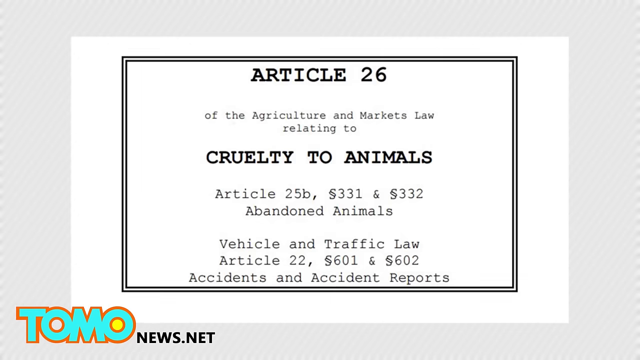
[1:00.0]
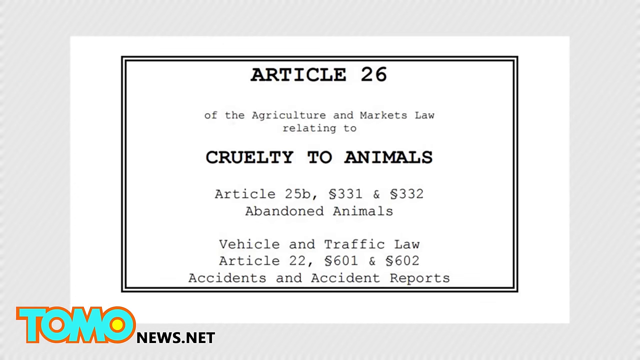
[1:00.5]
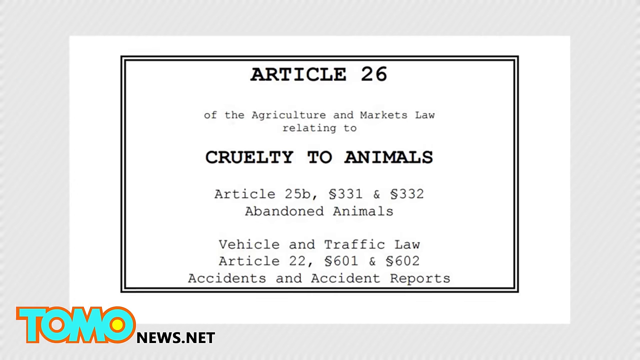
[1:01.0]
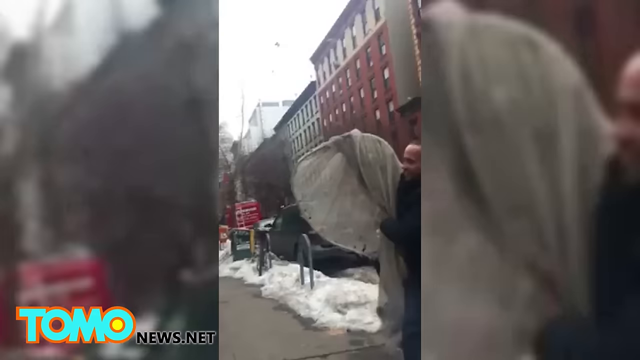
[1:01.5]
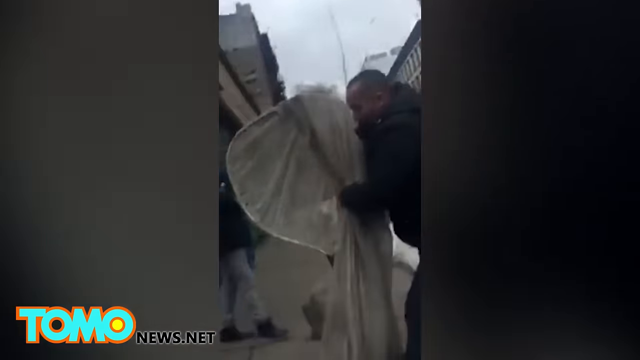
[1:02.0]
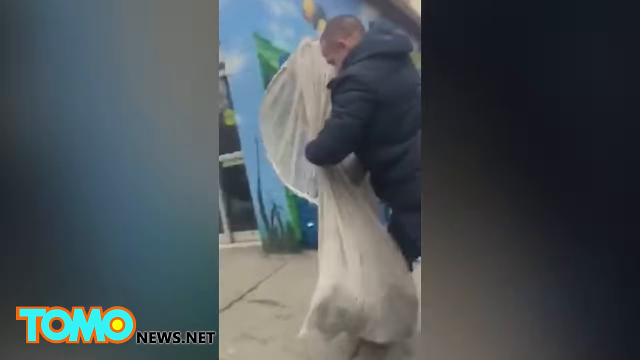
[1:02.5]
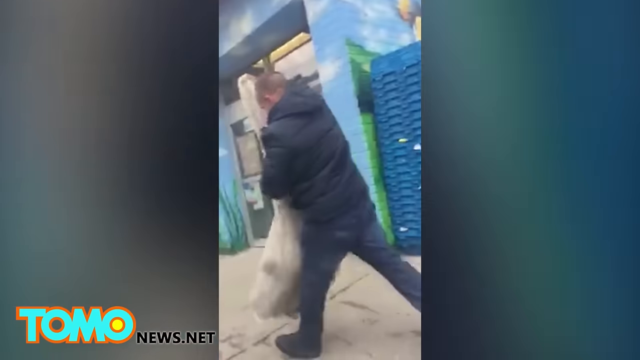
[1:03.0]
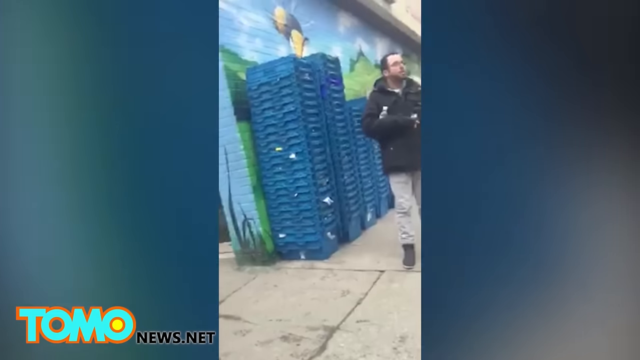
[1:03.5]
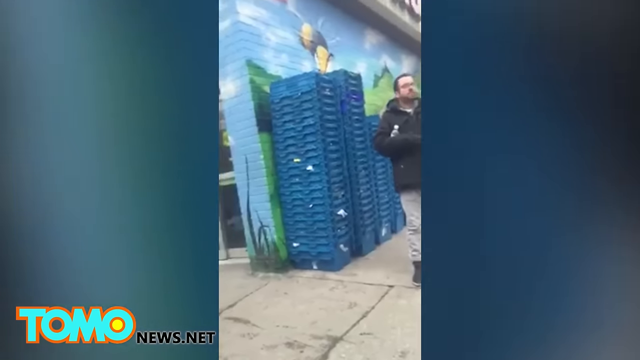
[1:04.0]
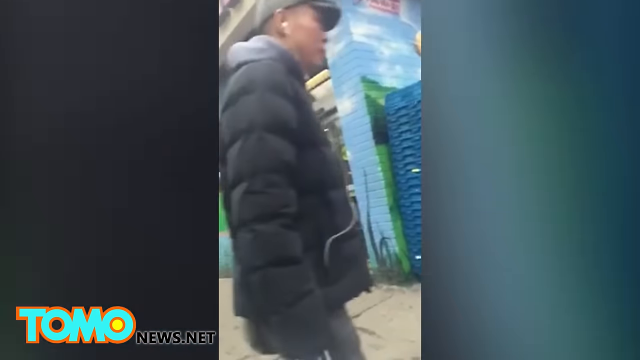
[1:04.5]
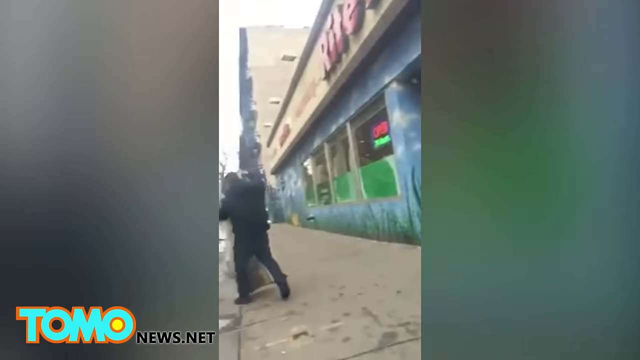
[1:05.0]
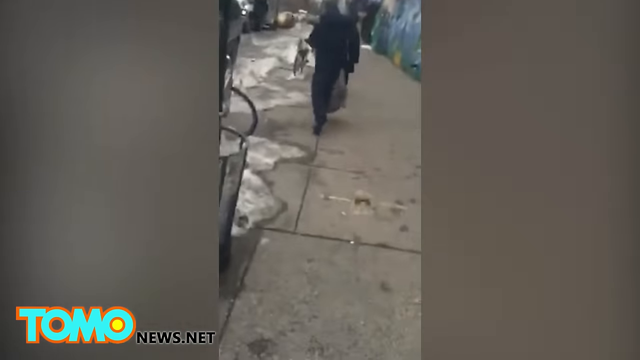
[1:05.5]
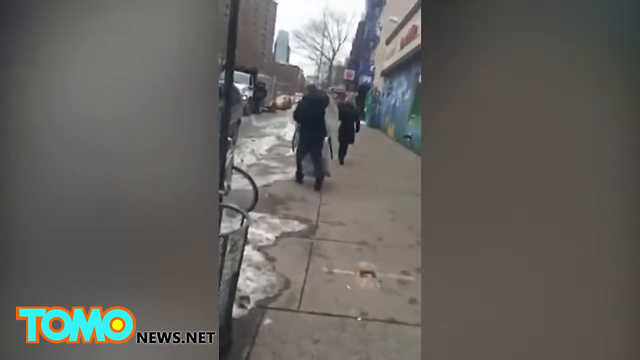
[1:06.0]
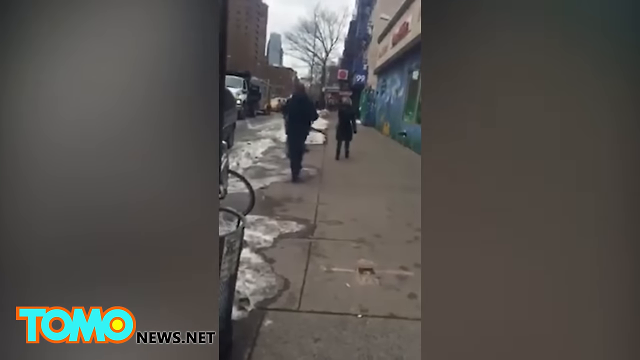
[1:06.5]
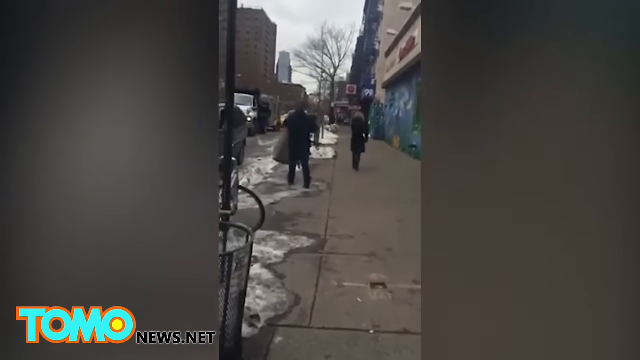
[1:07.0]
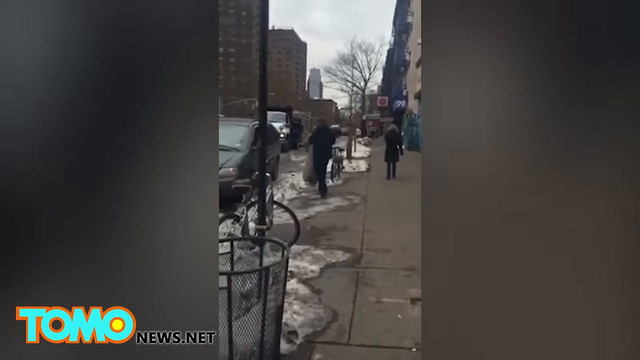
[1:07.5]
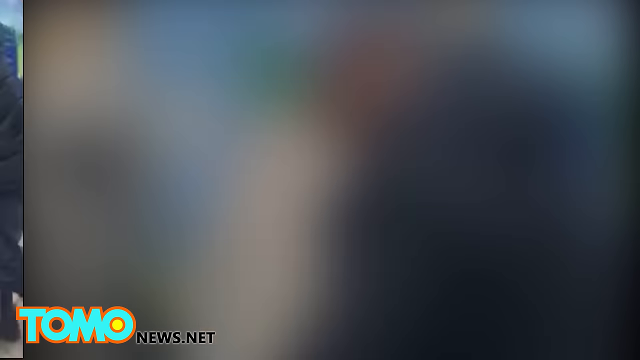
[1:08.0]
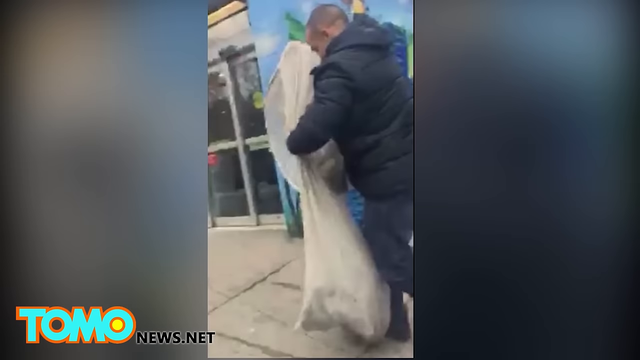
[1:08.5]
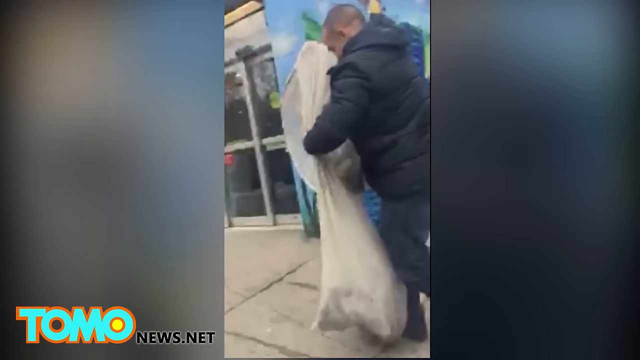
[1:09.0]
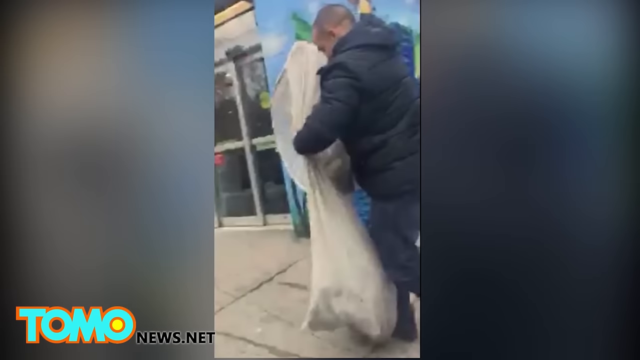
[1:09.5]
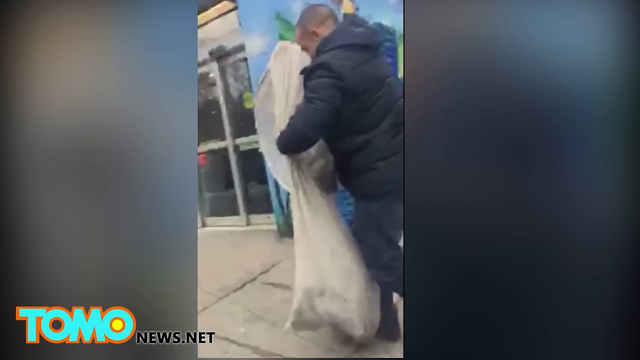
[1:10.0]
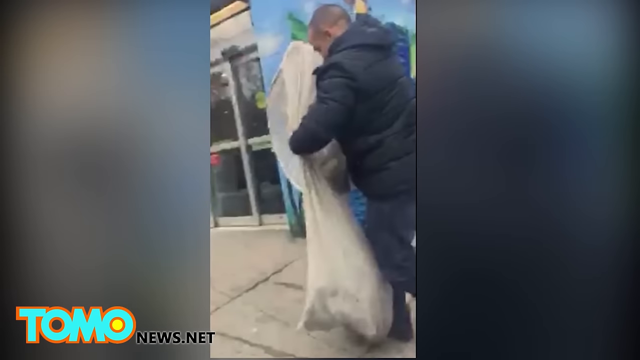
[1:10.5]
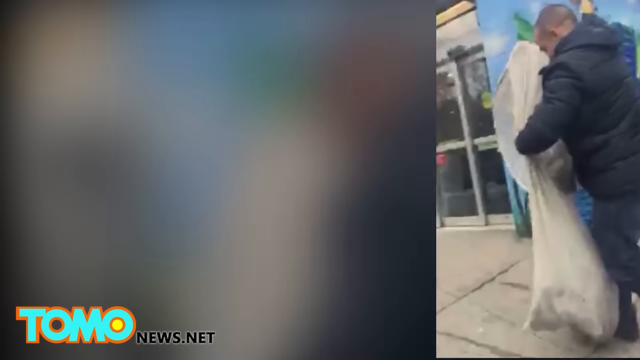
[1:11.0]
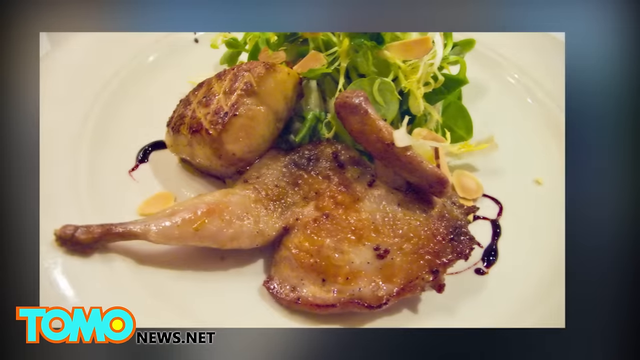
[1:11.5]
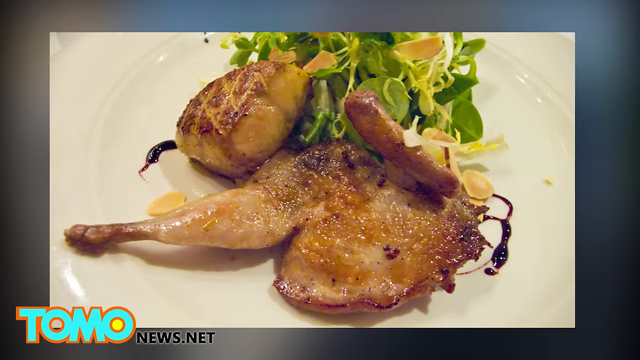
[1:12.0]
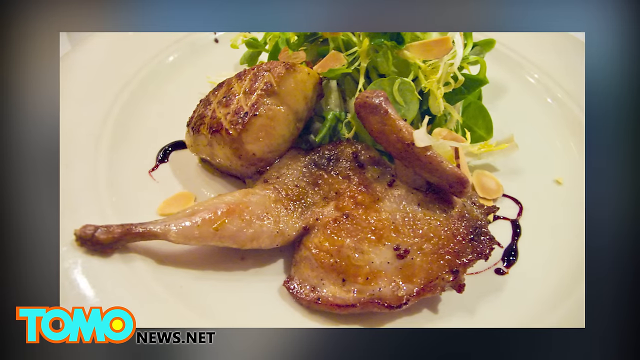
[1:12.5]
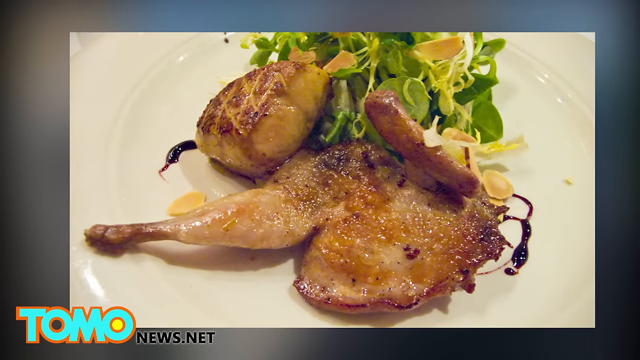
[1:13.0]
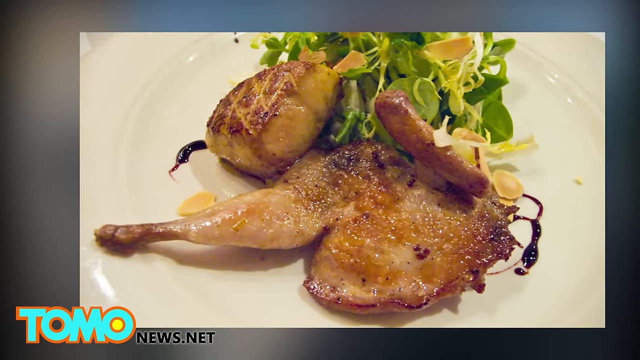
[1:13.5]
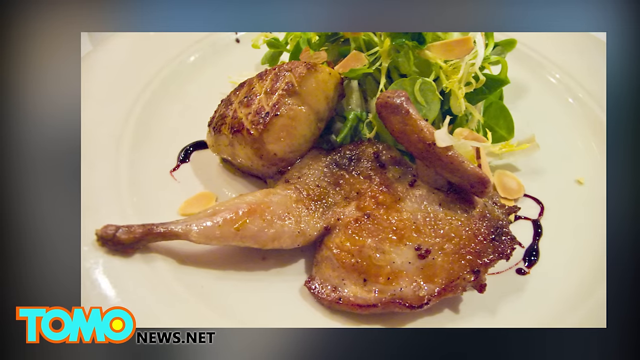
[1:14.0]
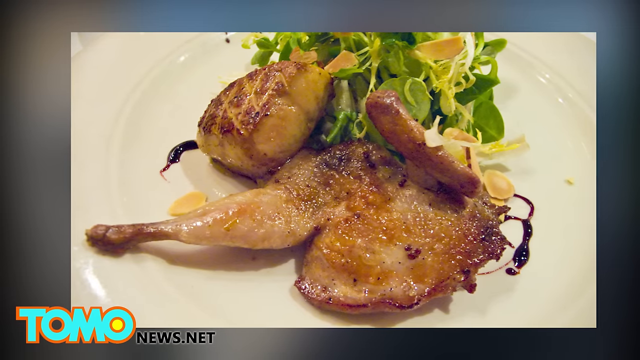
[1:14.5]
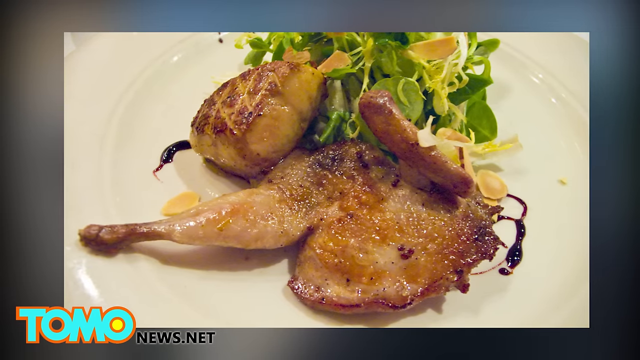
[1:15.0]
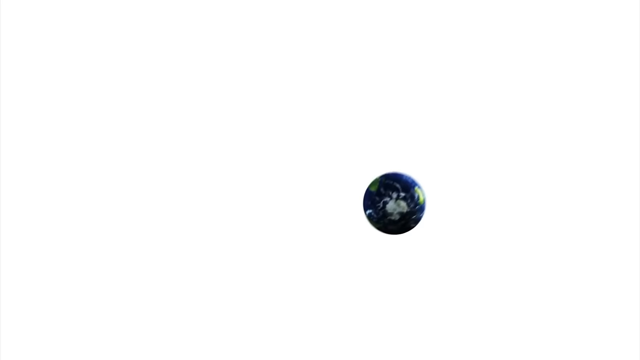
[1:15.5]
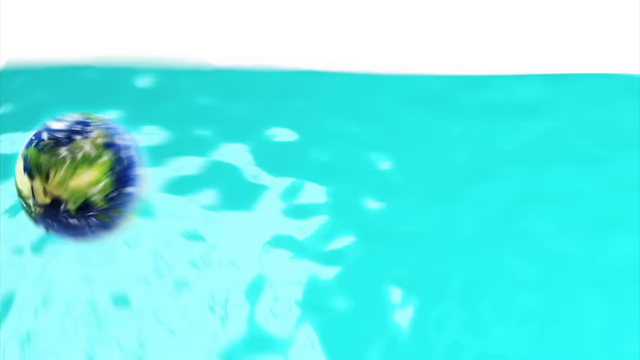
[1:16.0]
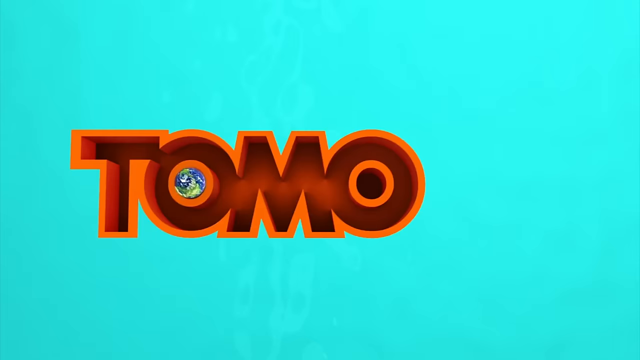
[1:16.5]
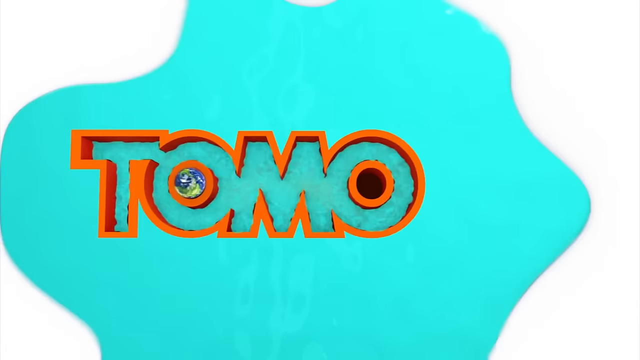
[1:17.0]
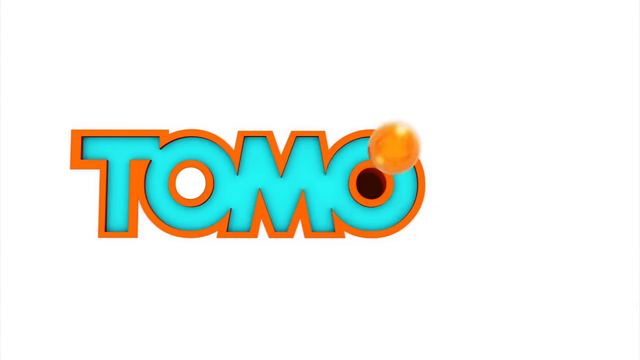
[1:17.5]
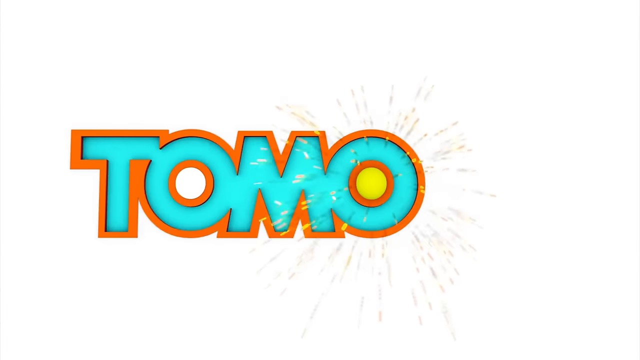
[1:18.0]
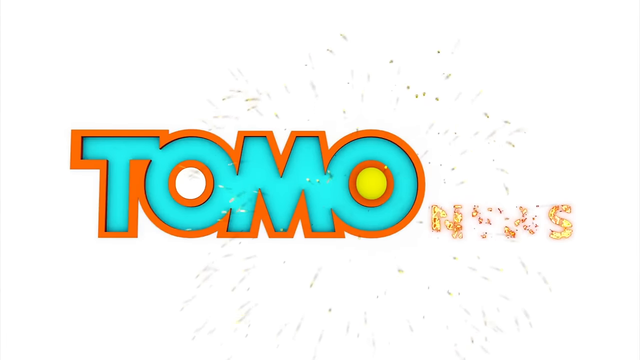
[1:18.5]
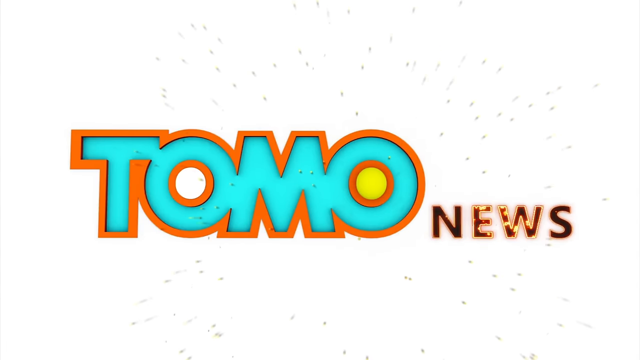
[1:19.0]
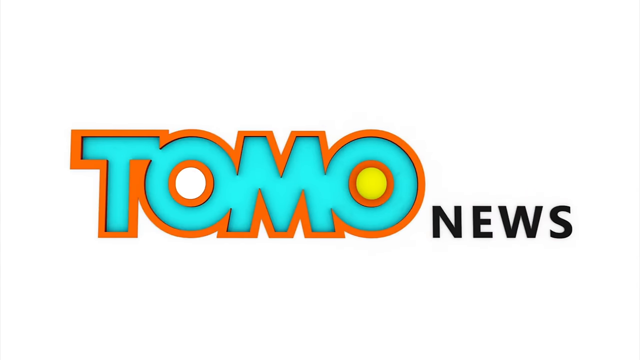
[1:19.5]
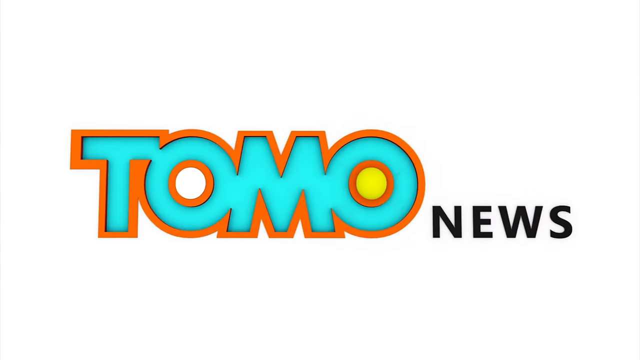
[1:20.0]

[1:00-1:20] The video transitions to show once again the vertical clip of the man holding the bag of pigeons and walking on the street towards his car. Shot on a handheld device, it shows the man fumbling with the burlap sack as he walks towards his car, a grey Dodge Grand Caravan minivan. The image is once again shown as a still, moving from left to right before transitioning off the right side of the screen. An image of a duck leg served as a restaurant meal is then shown, moving from left to right on the screen and bouncing. Next comes an animation with a turquoise background showing the Tomo News Network against a white background, with lots of paint splatter and other animations accompanying the news logo. The video ends on the Tomo News logo in blue and orange, with "News" written in black against a plain white background; the second O has a yellow highlight within it.